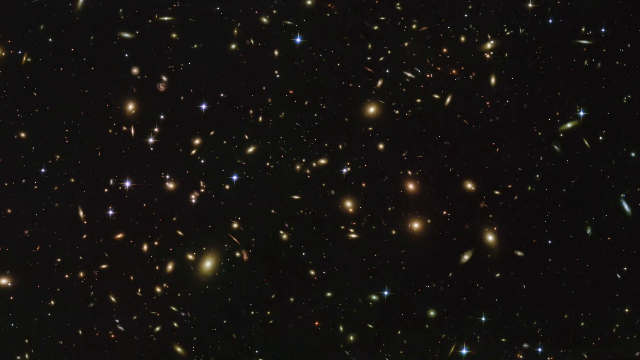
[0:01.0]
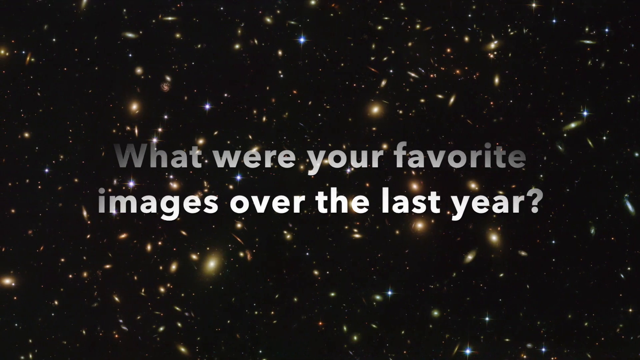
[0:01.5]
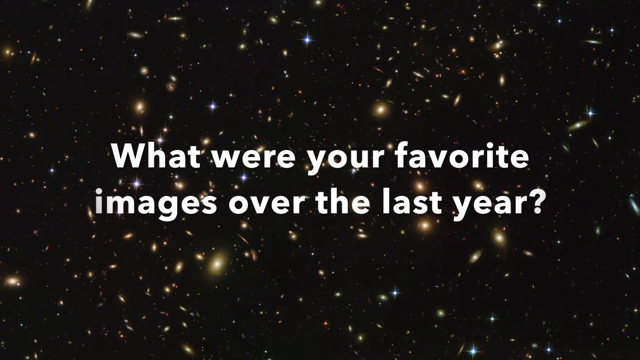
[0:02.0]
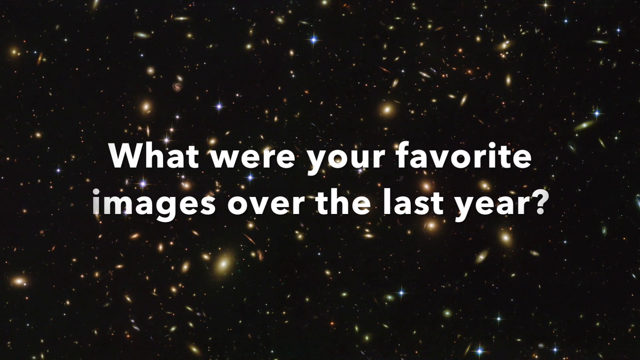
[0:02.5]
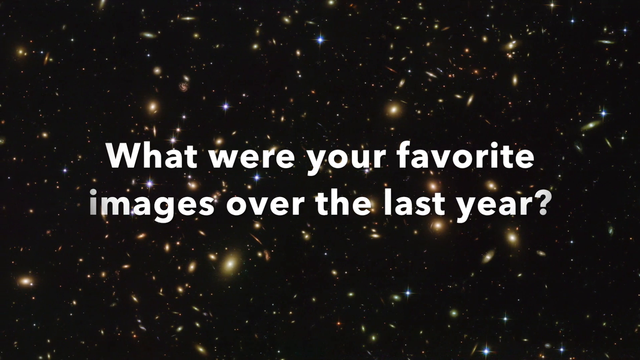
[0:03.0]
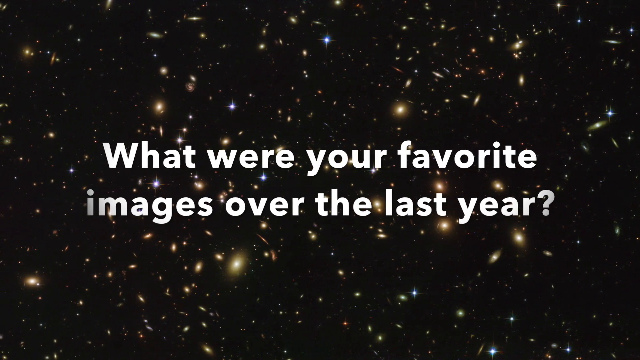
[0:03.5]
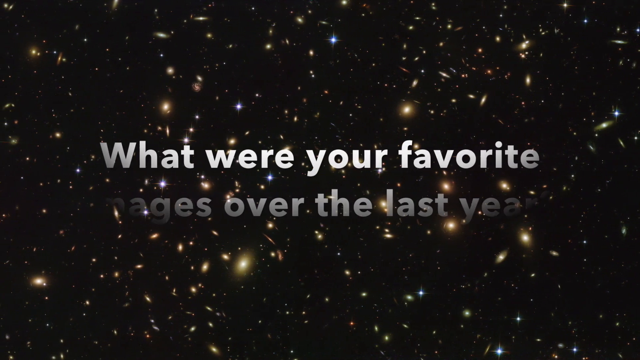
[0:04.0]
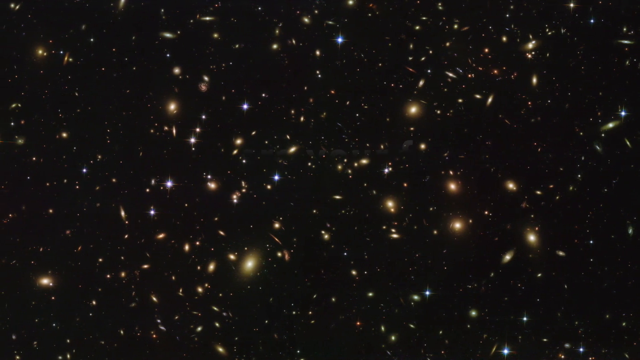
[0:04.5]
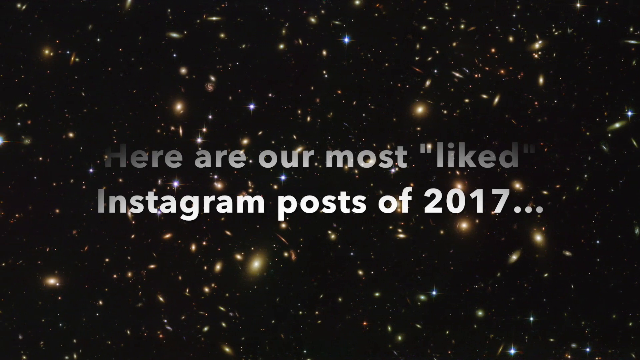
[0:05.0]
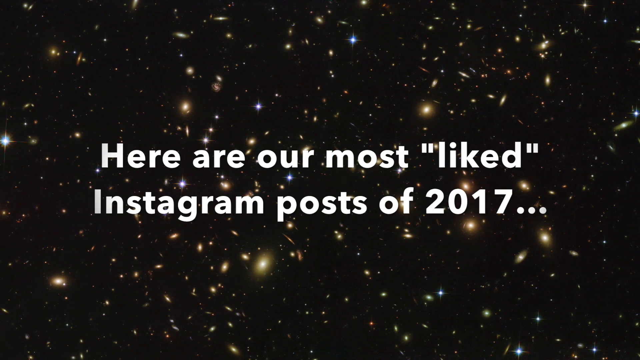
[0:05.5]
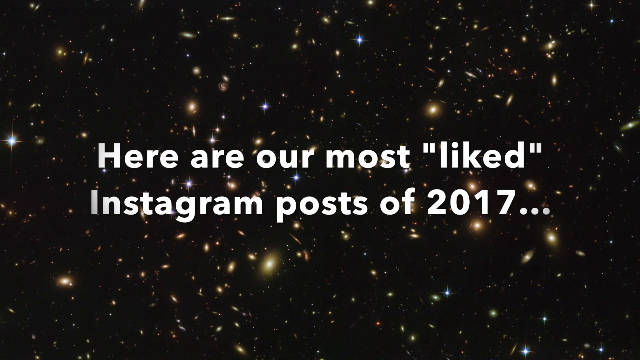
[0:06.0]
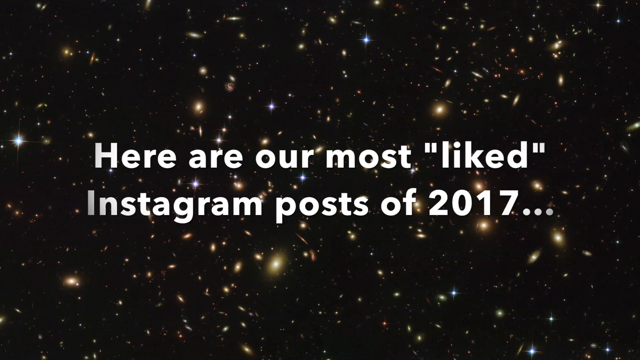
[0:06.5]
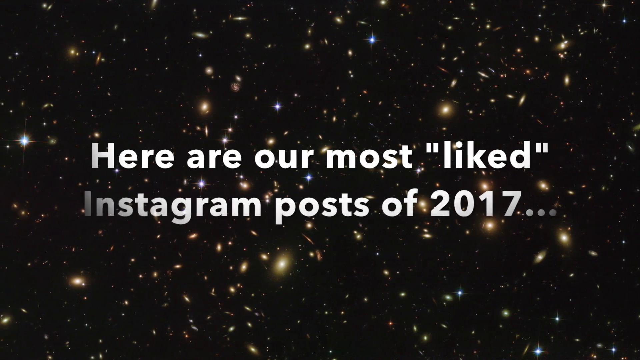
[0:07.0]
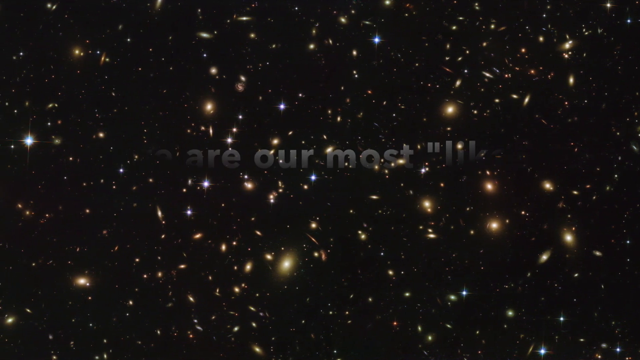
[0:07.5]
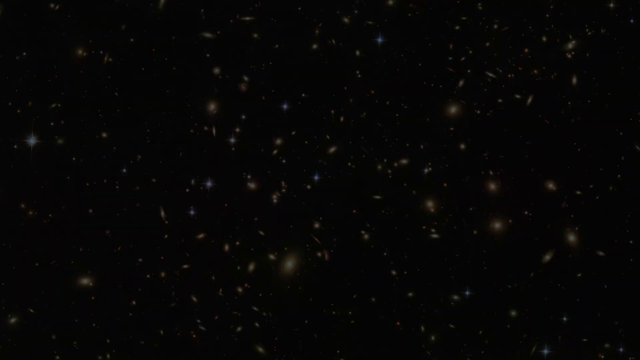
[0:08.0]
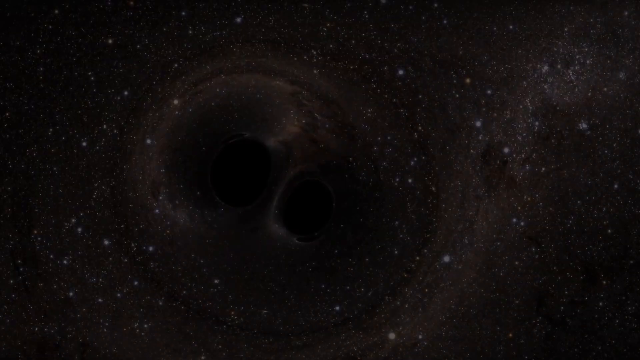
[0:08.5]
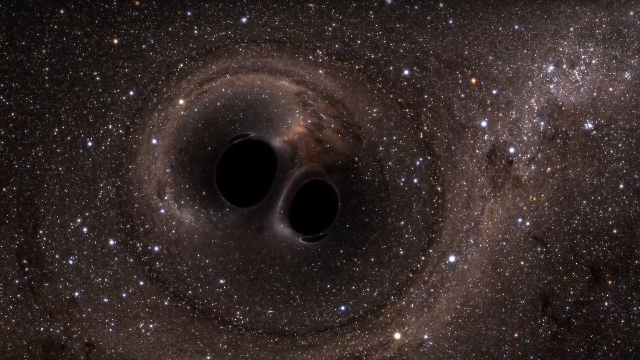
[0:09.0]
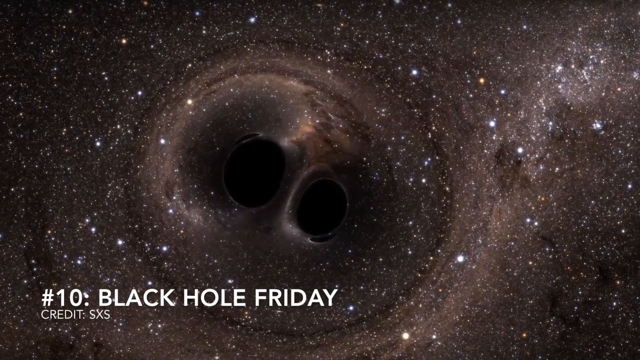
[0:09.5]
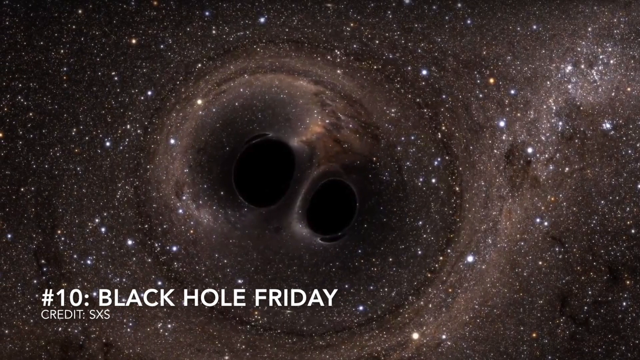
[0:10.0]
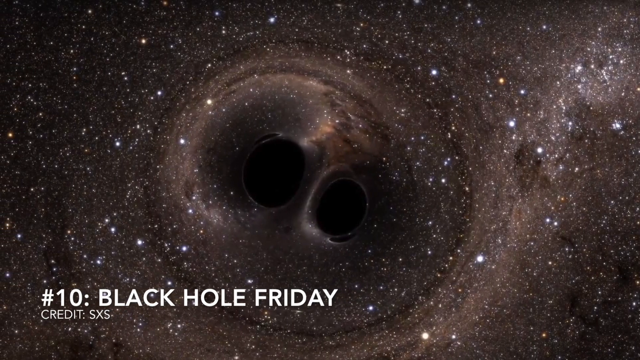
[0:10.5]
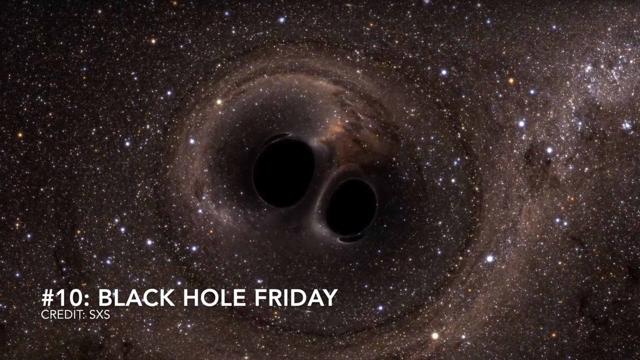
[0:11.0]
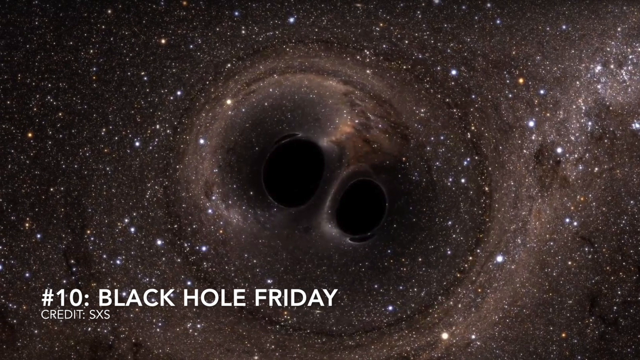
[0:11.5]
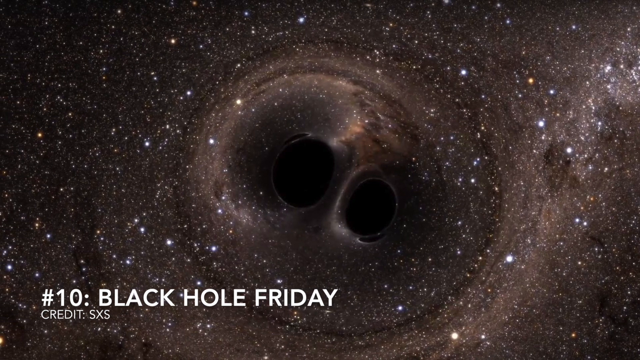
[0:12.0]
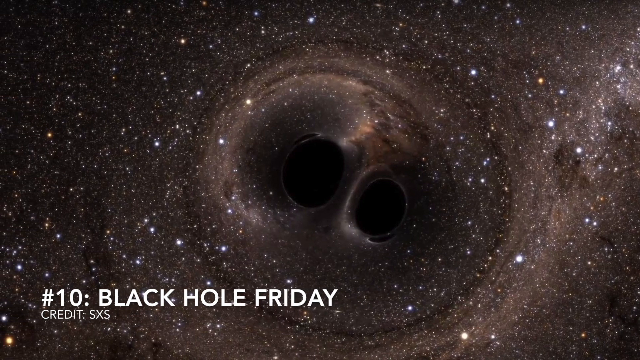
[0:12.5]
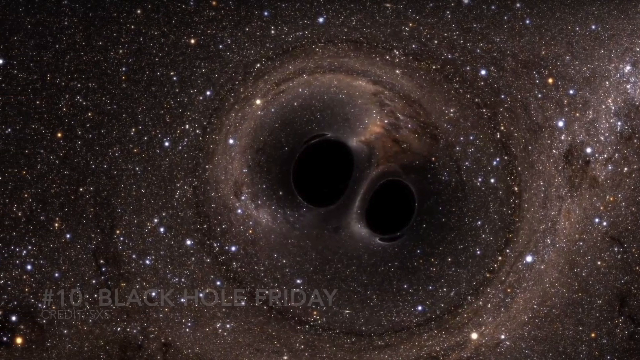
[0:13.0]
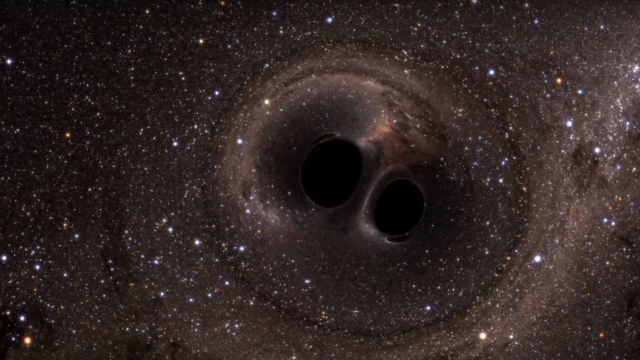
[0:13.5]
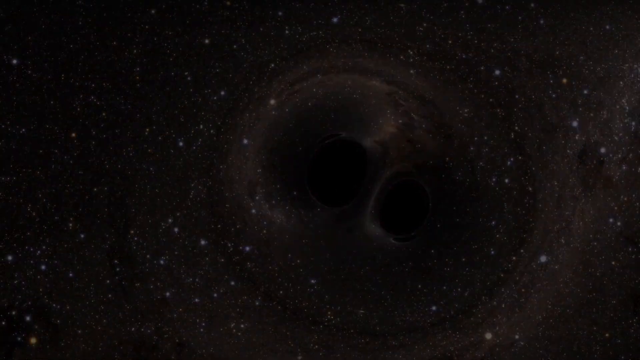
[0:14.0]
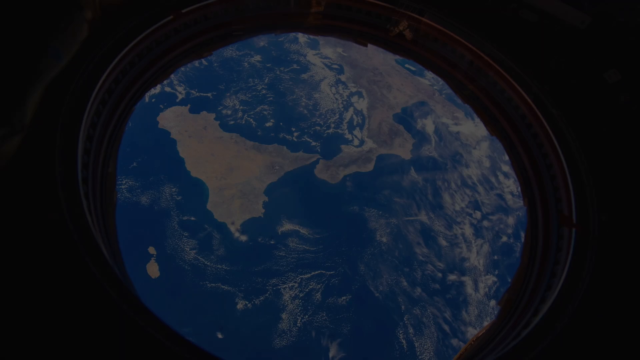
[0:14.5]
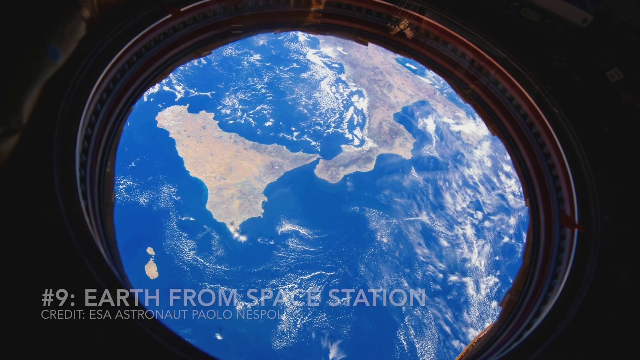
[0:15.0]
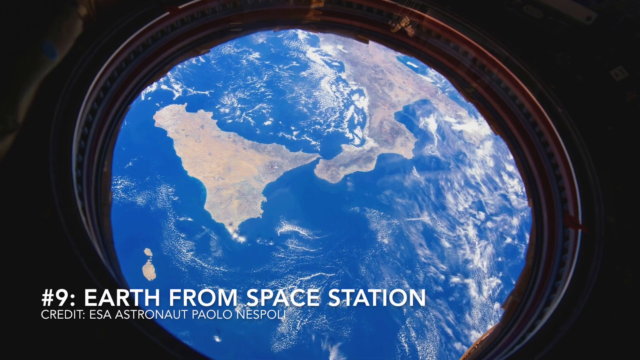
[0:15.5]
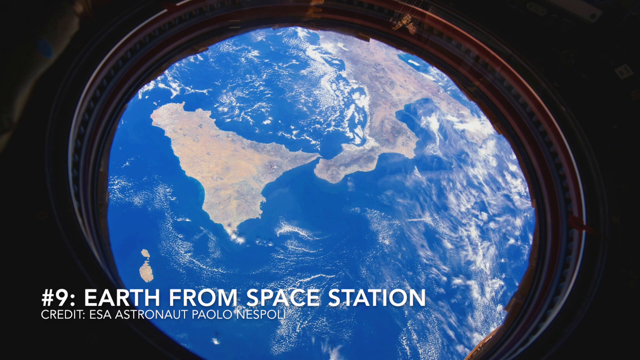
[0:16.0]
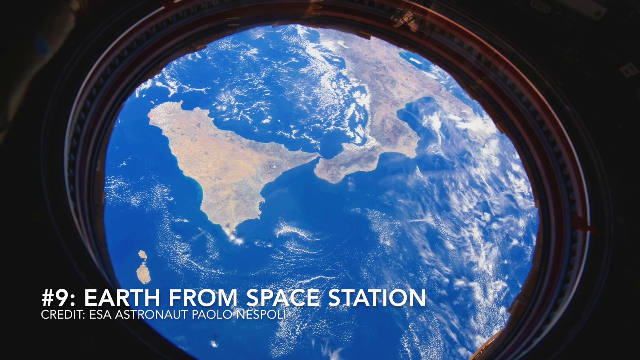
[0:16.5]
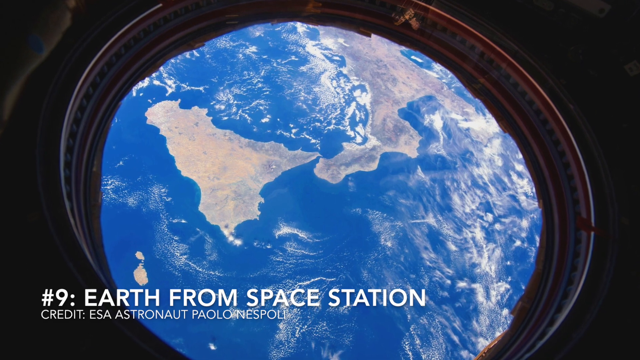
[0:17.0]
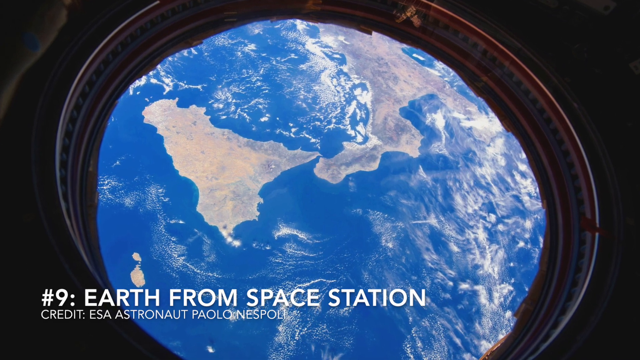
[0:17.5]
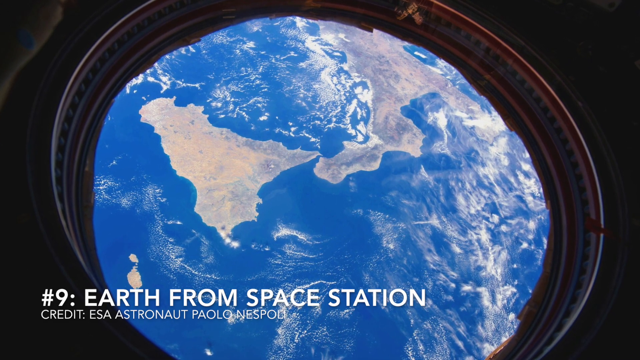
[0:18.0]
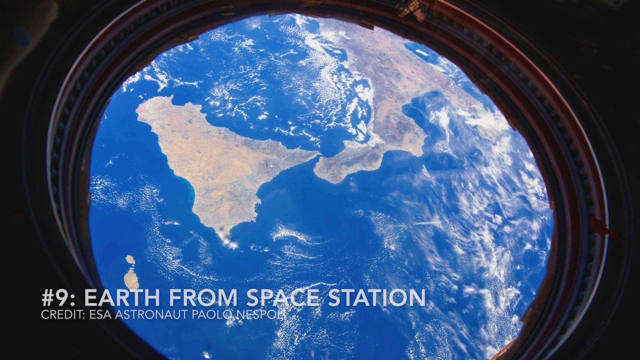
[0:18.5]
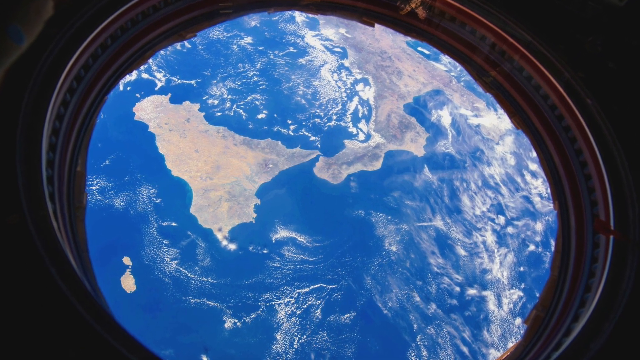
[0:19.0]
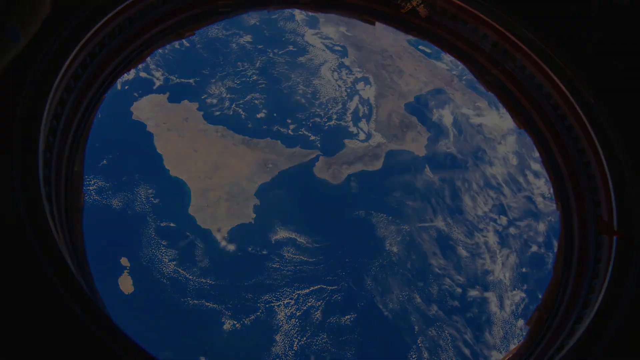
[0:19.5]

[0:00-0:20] In the upper left corner is NASA's emblem with the word NASA on it. The background is black with stars all over it, pinpoints of light in different colors and sizes, mostly blue and yellow. Over it, white writing reads "what were your favorite images over the last year". The writing changes to "here are our most liked Instagram posts of 2017". Number 10, "Black Hole Friday", follows: an image of a black hole in the very center of the screen with stars seemingly everywhere. Next is number nine, "Earth from Space Station". North America, Europe and Russia are visible, along with blue water and white clouds, and the Earth almost looks like a very distorted orb against a black background.